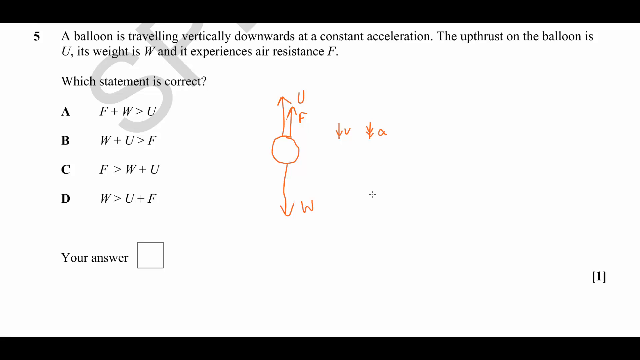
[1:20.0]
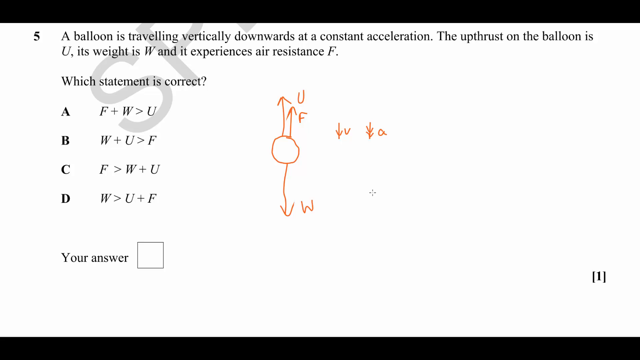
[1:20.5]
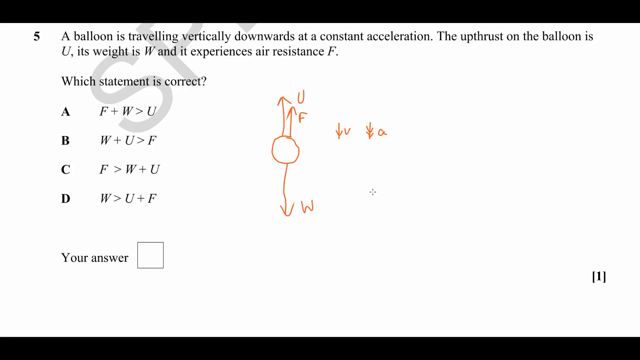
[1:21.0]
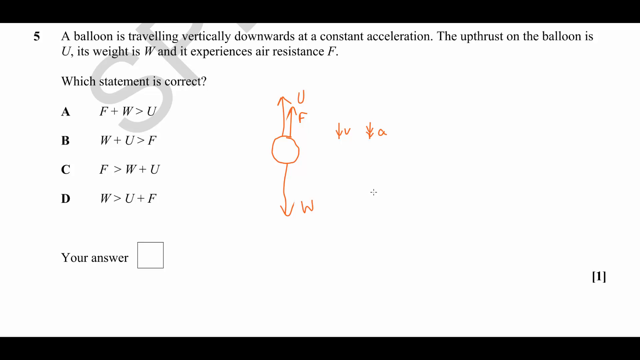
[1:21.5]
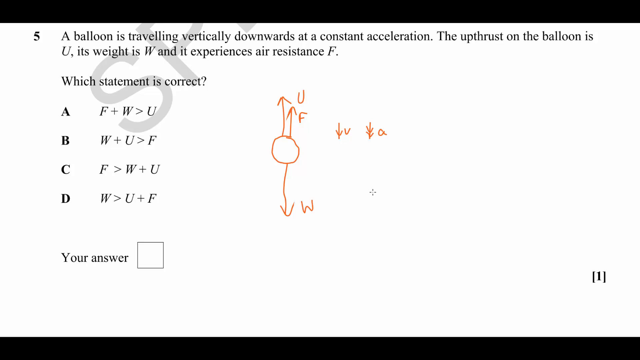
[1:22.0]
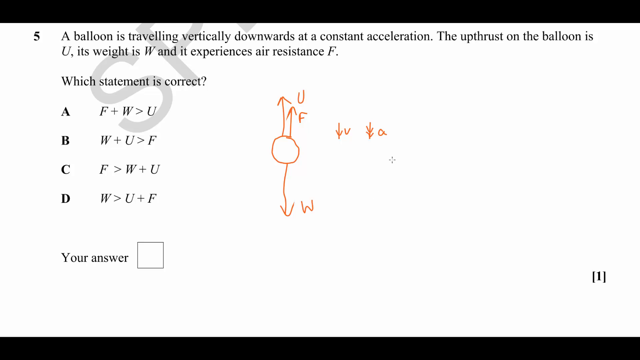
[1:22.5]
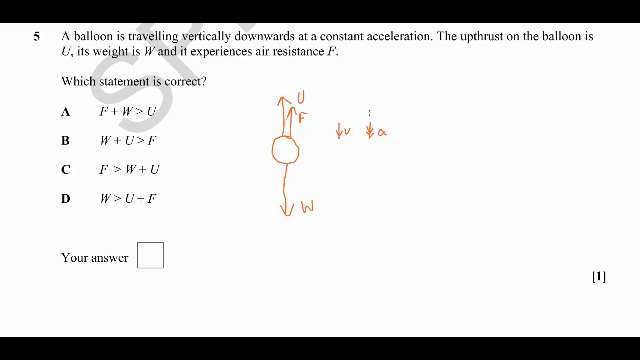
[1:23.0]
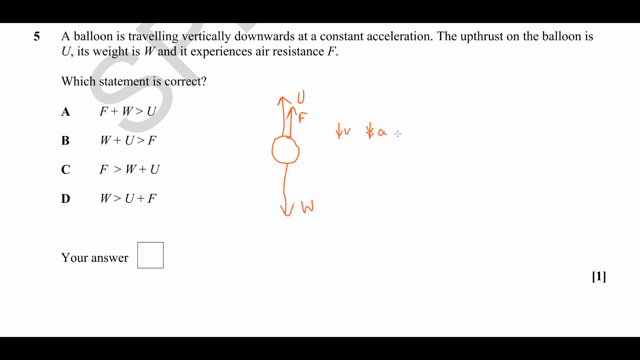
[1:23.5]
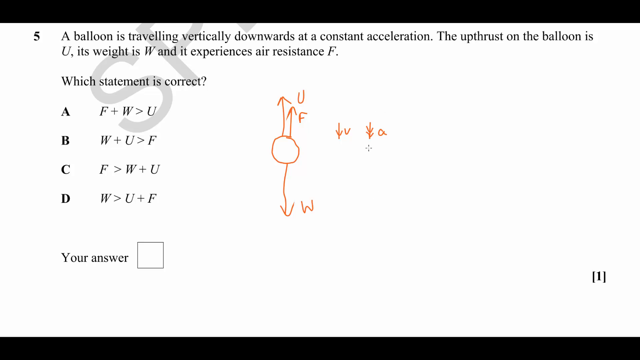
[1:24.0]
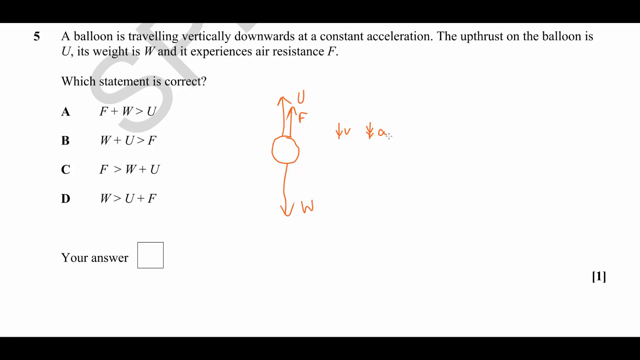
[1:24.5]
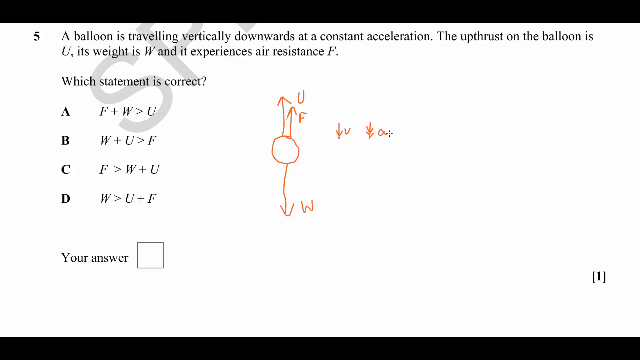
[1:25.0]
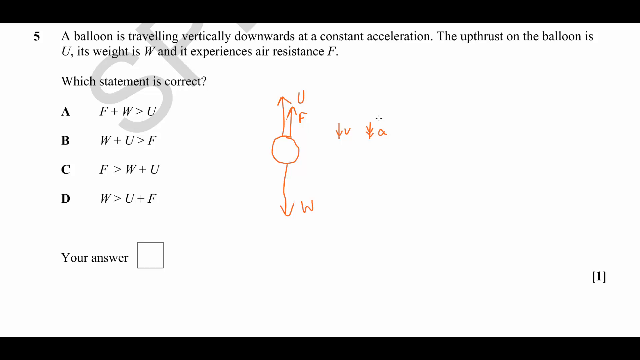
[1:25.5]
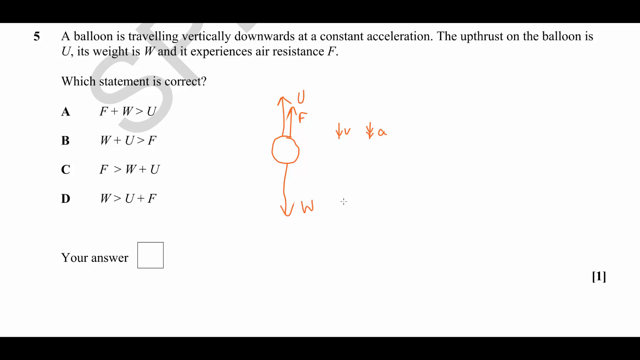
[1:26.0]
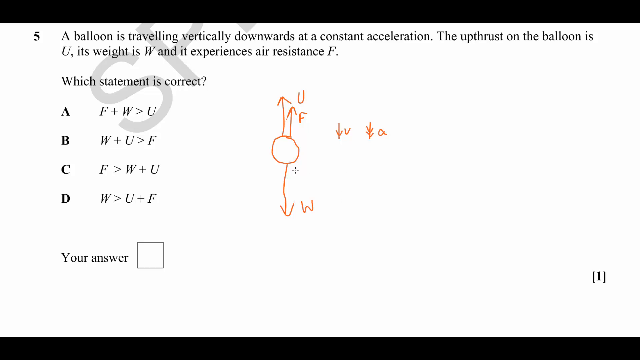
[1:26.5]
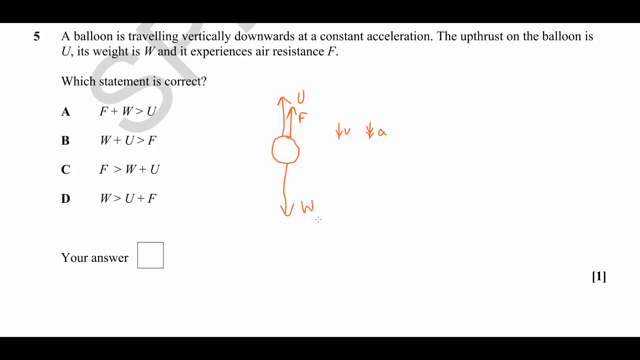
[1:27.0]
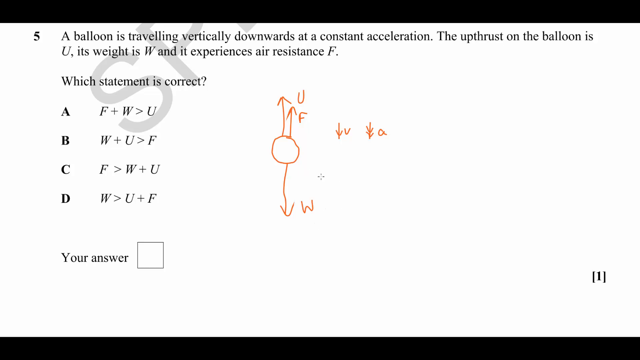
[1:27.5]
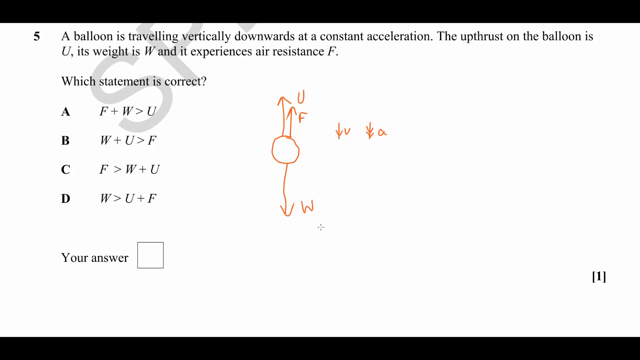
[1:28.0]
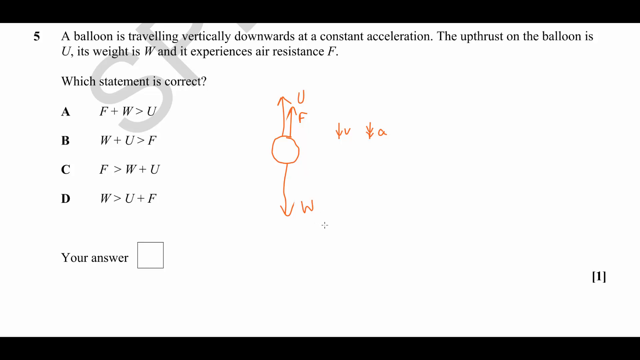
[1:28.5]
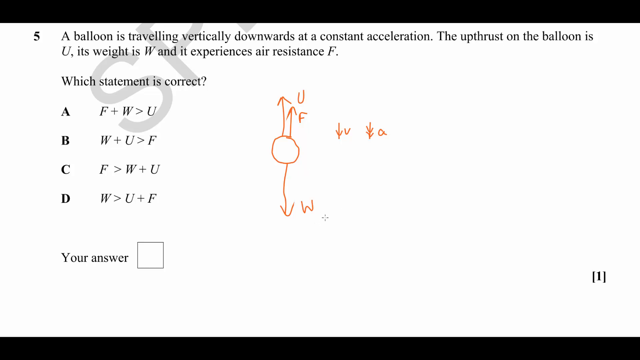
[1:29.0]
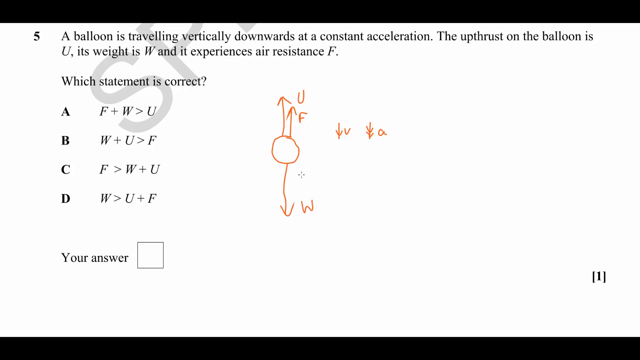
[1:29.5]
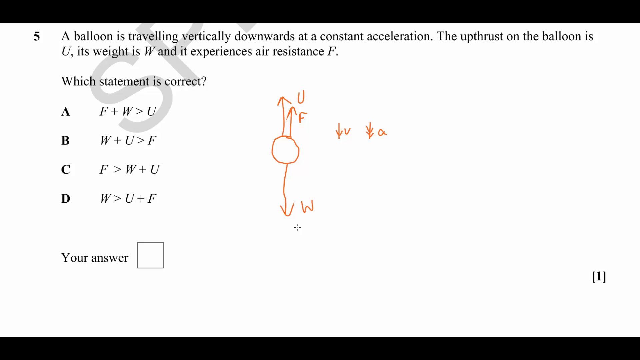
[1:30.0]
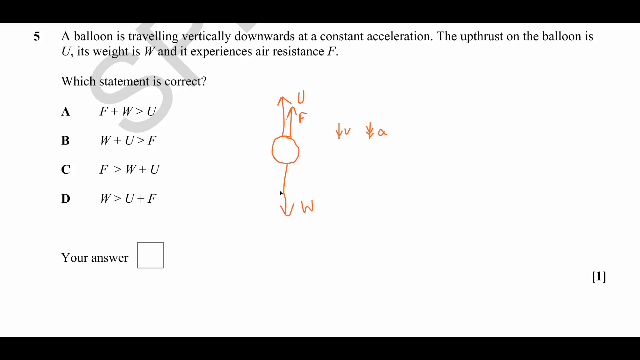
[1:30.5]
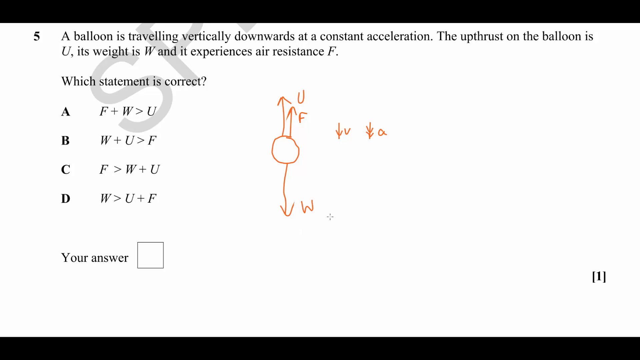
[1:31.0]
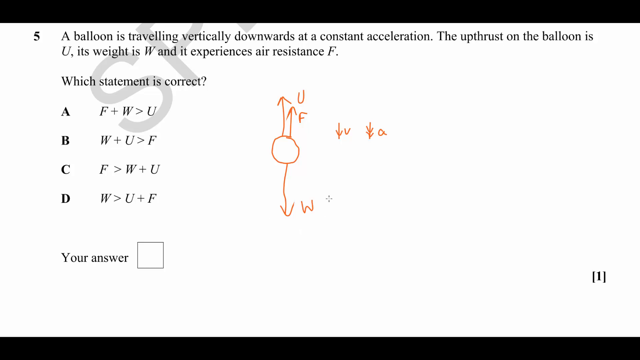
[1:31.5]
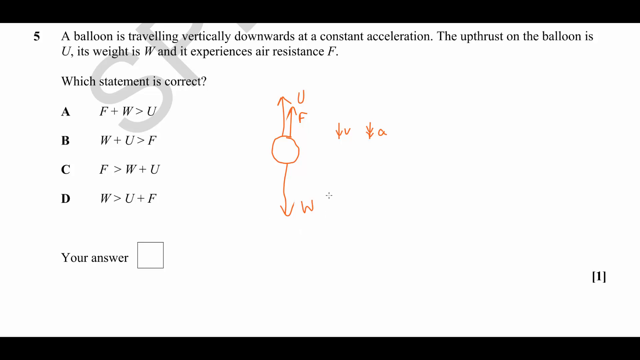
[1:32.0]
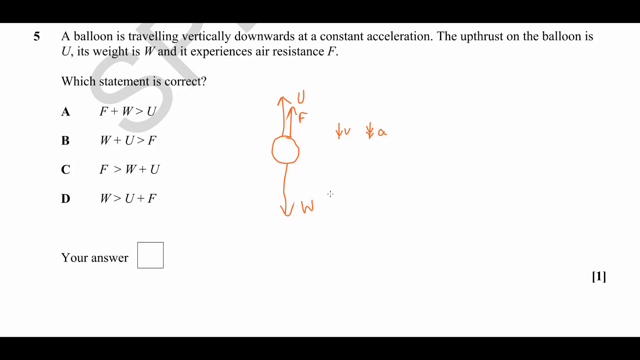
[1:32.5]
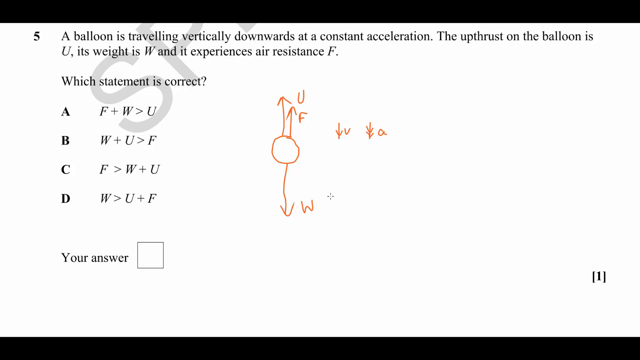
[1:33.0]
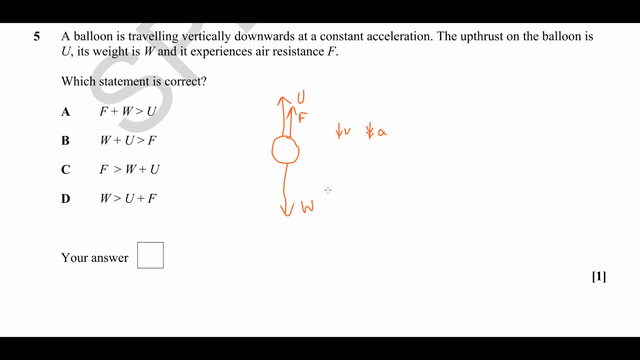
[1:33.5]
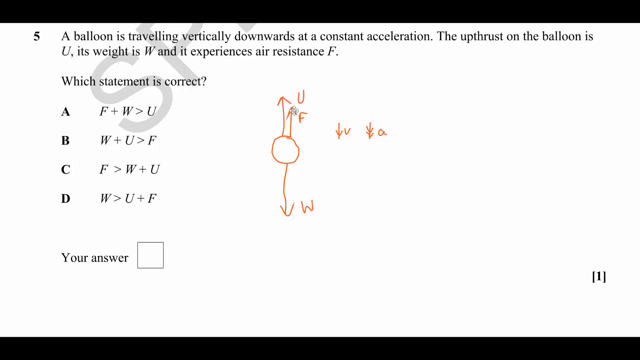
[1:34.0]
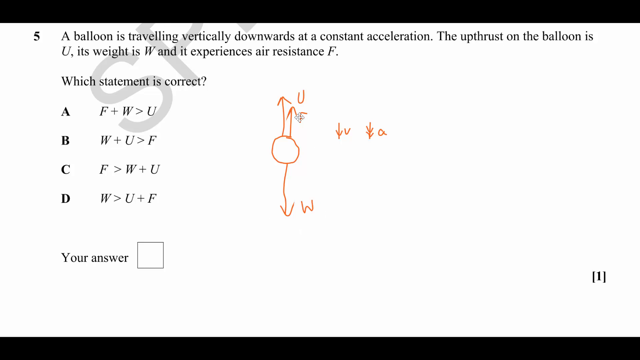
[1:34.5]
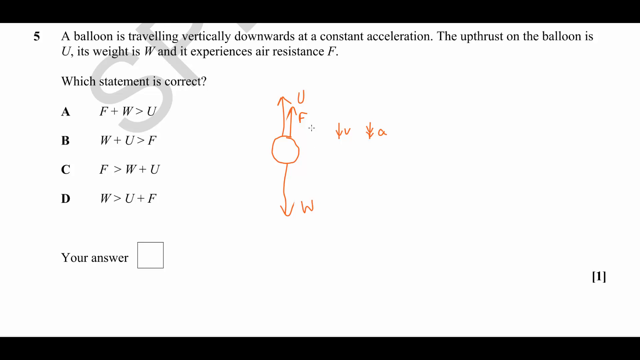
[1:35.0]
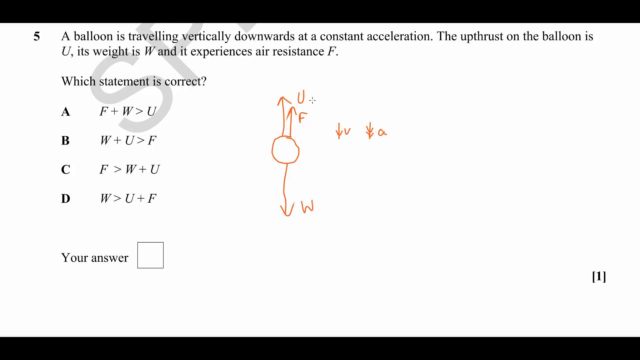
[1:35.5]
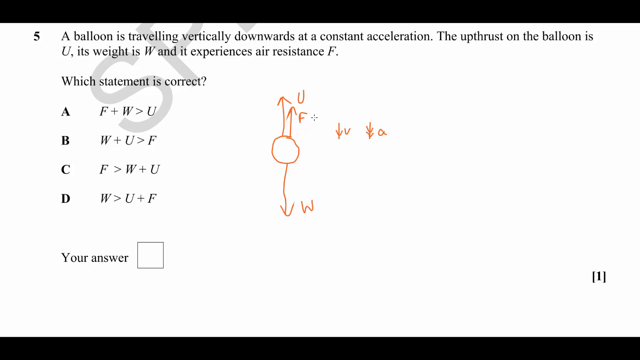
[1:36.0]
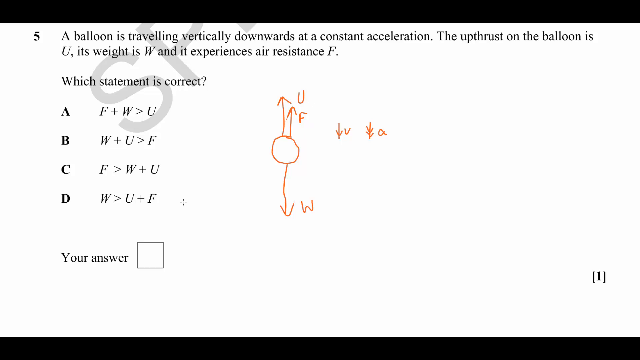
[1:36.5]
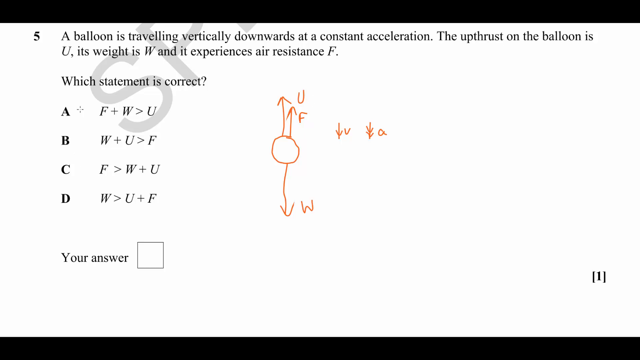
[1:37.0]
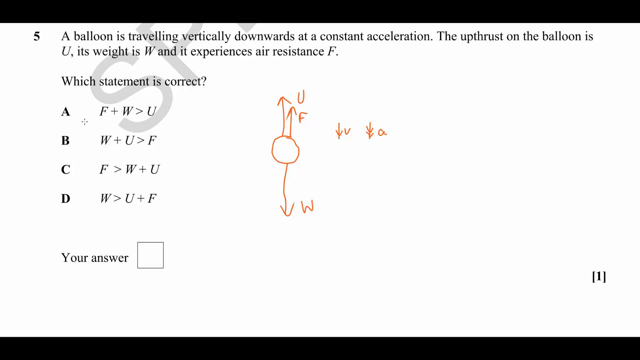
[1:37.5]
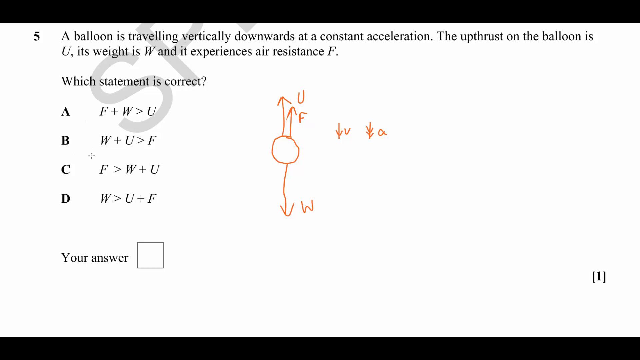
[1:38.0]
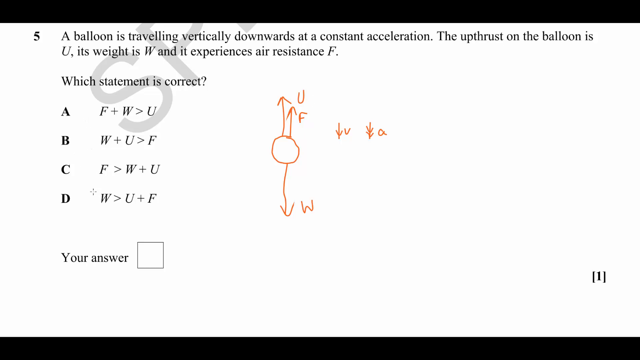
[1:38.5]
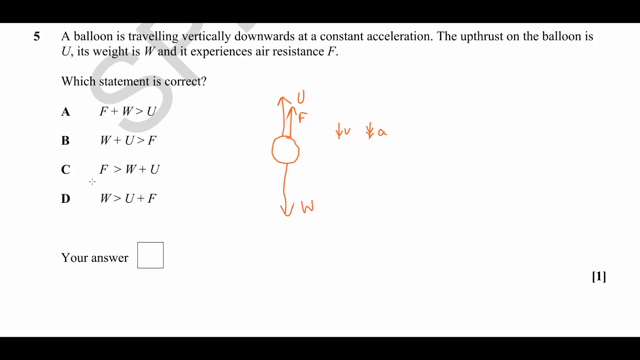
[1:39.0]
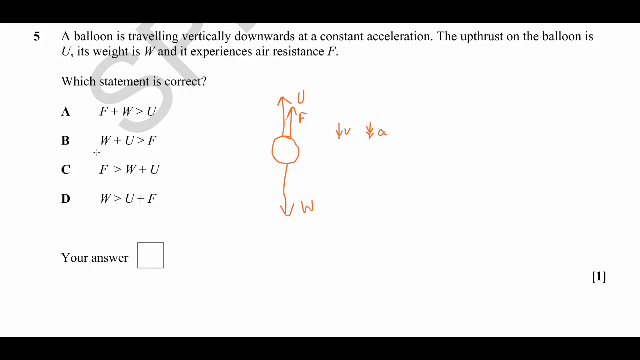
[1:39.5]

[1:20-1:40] A computer screen shows the question about a balloon traveling vertically downwards at a constant acceleration. It provides three constants, U, W, and F, and asks which statement is correct, offering four different relations between them. To the right, a circle is drawn in orange marker. Two arrows come up out of the circle, a larger upward arrow labeled U and a smaller upward arrow labeled F, along with a downward arrow labeled W, and beside it are two symbols, one with the letter v and one with the letter a. The cursor circles a few of these variables as if to highlight them, does the same with the F arrow, and then slowly works down the four answers, as if trying to find the correct one.